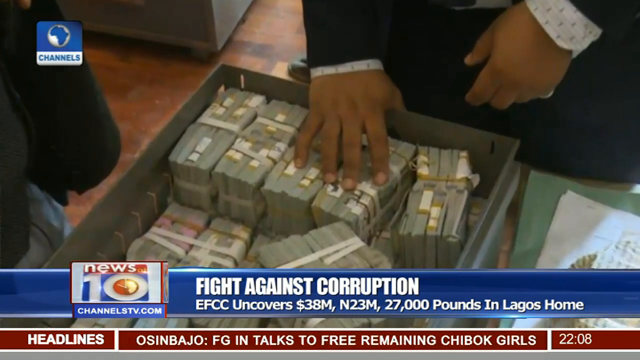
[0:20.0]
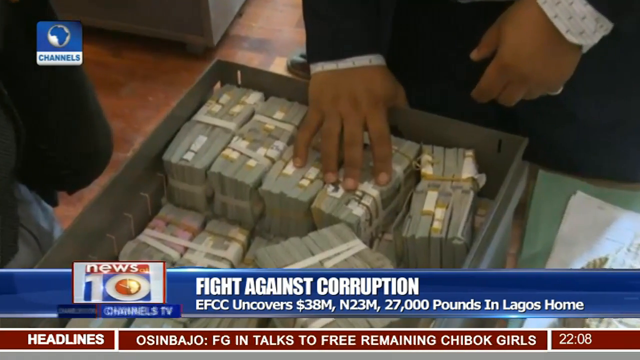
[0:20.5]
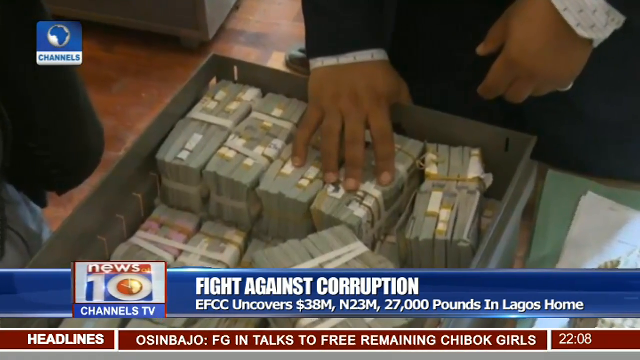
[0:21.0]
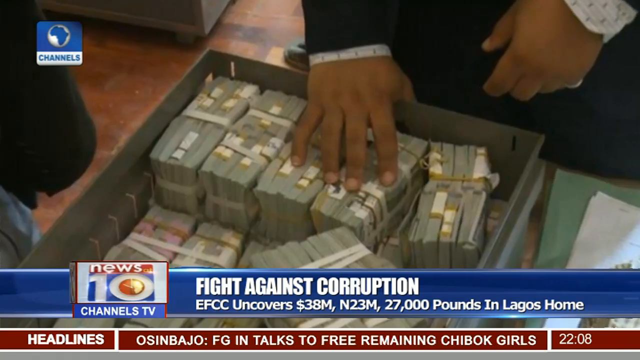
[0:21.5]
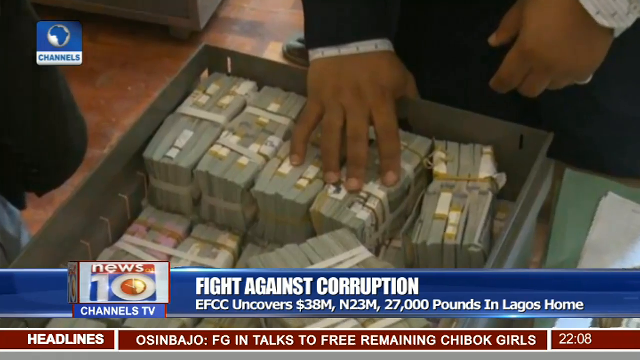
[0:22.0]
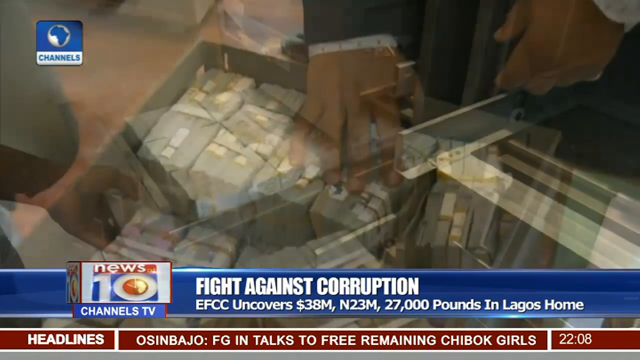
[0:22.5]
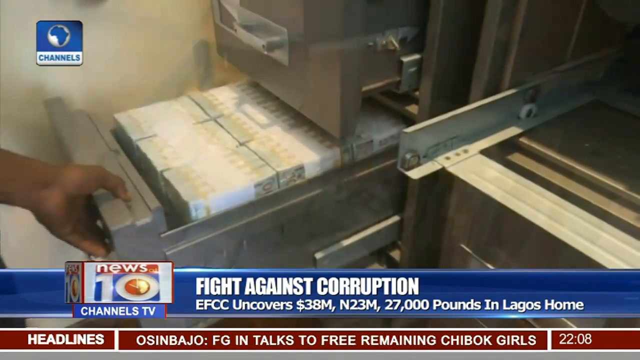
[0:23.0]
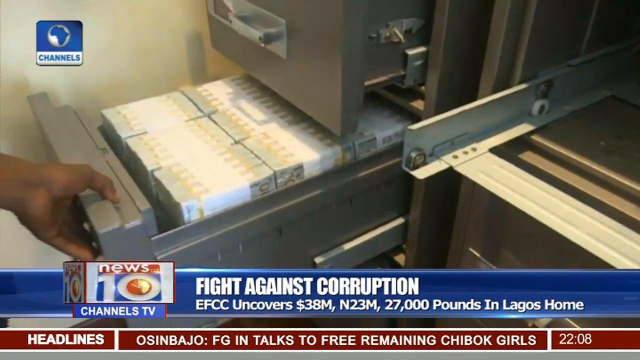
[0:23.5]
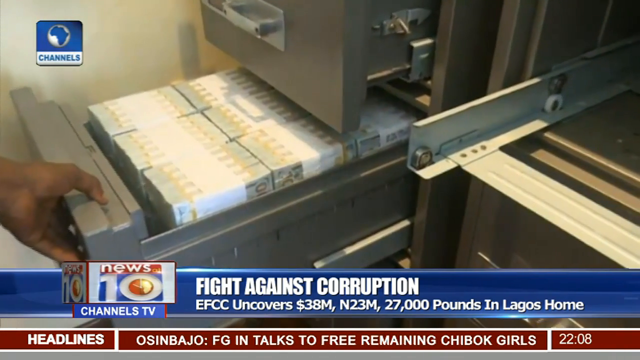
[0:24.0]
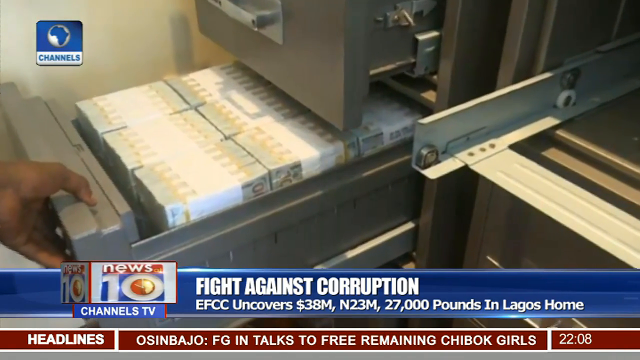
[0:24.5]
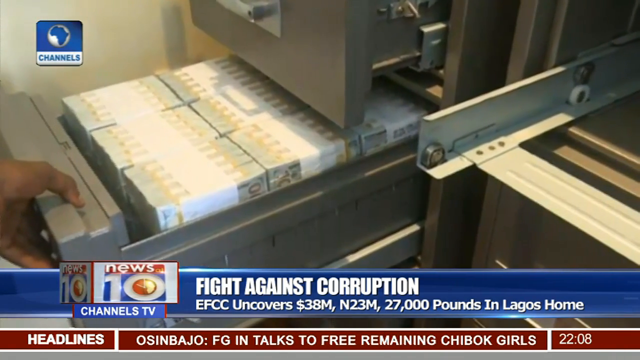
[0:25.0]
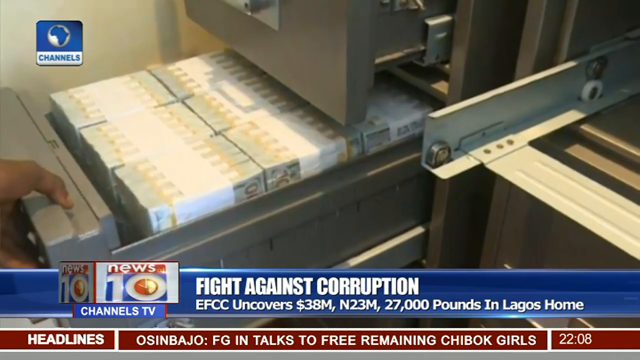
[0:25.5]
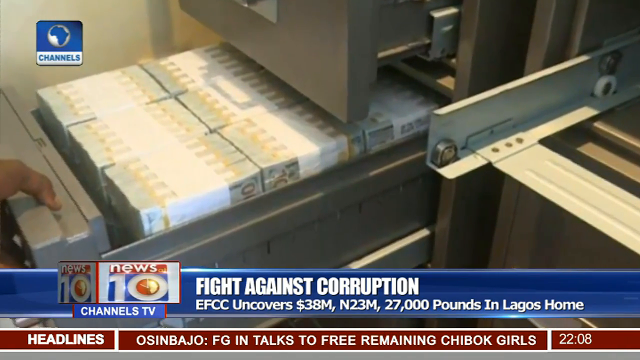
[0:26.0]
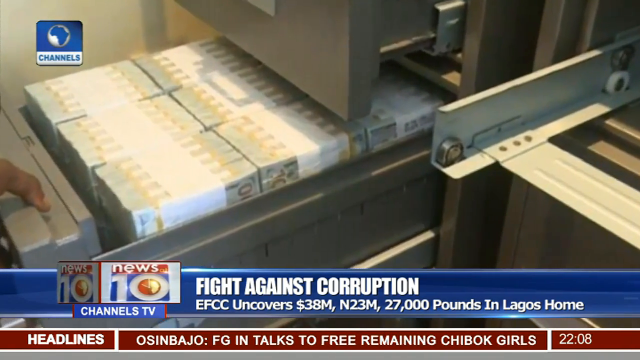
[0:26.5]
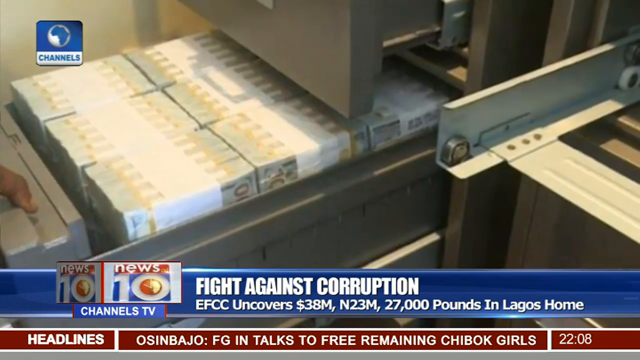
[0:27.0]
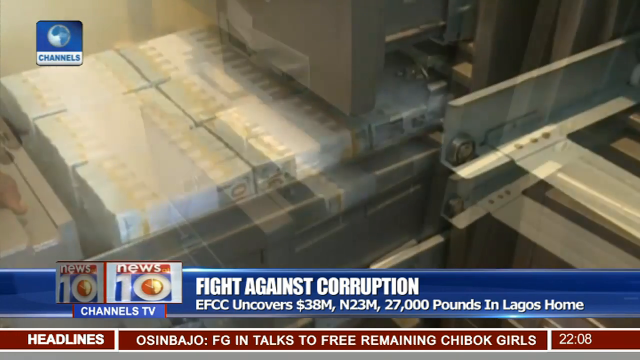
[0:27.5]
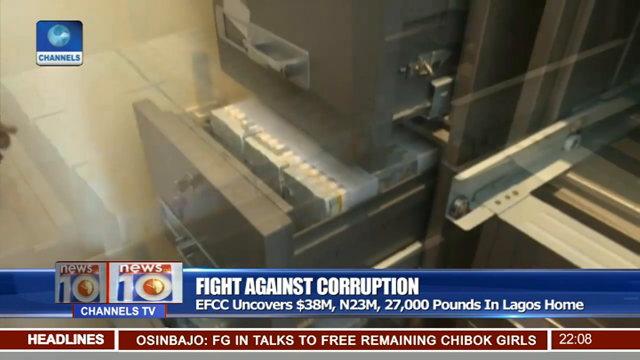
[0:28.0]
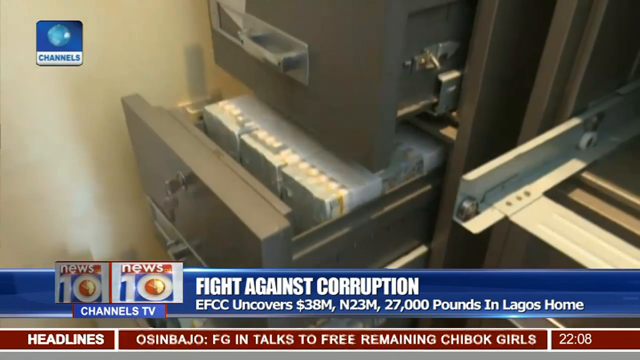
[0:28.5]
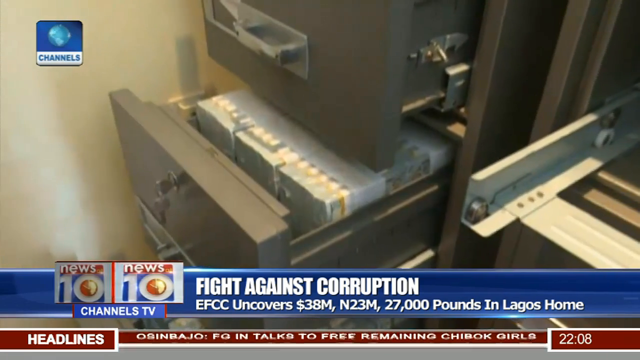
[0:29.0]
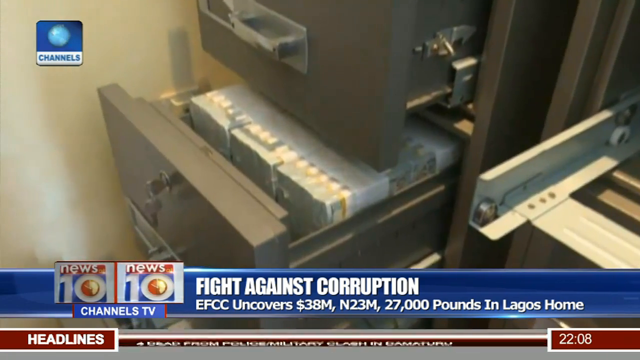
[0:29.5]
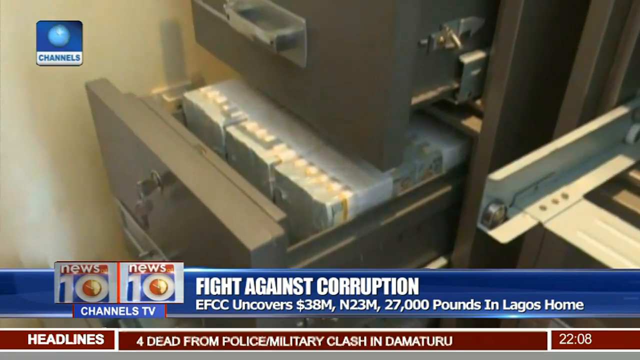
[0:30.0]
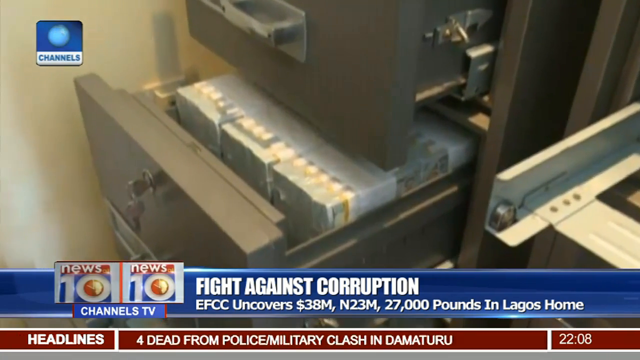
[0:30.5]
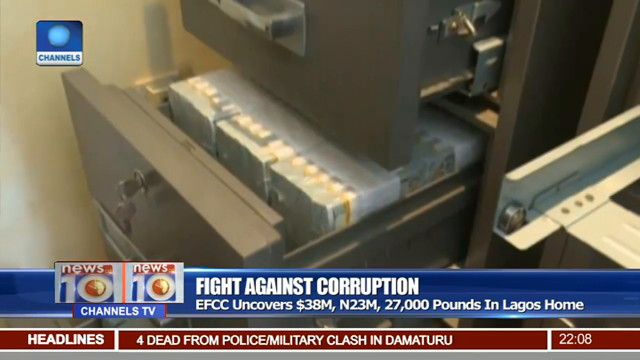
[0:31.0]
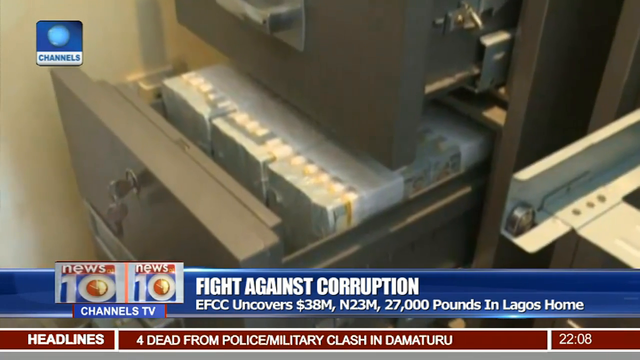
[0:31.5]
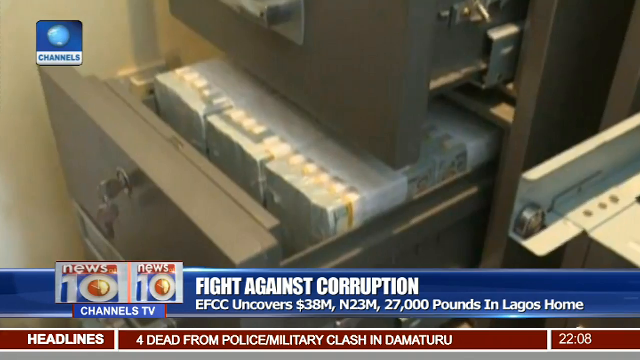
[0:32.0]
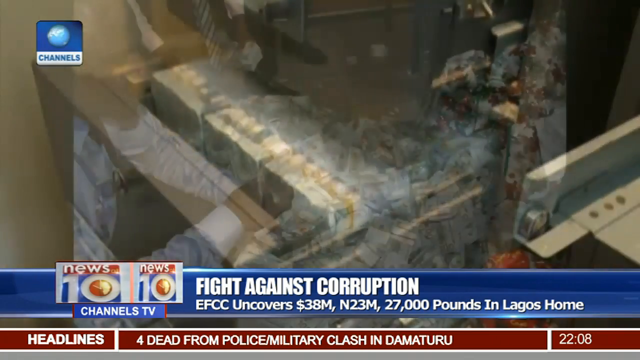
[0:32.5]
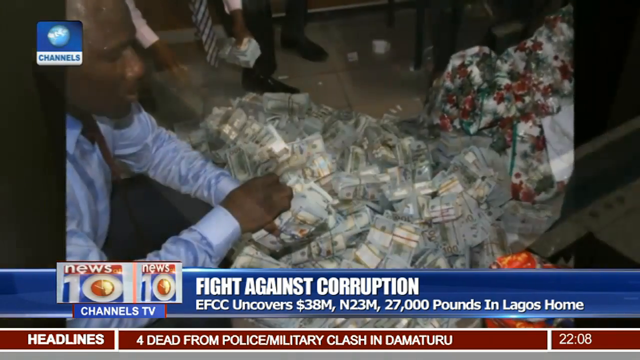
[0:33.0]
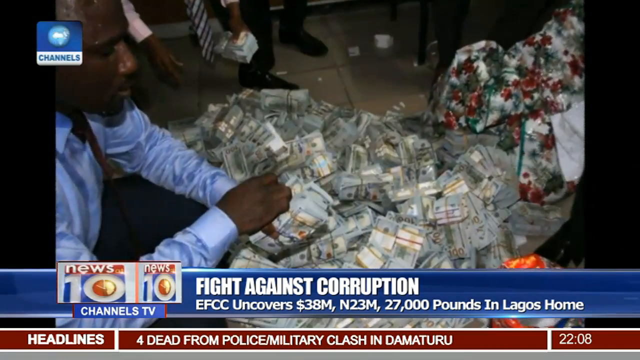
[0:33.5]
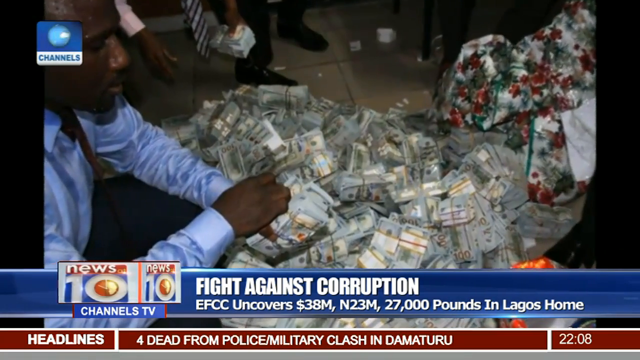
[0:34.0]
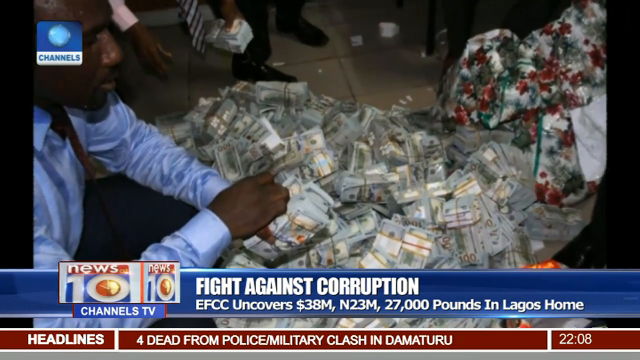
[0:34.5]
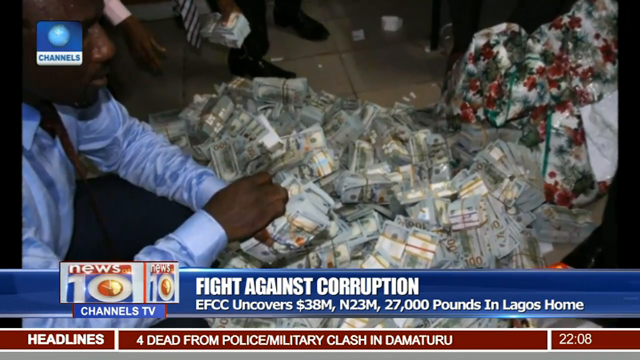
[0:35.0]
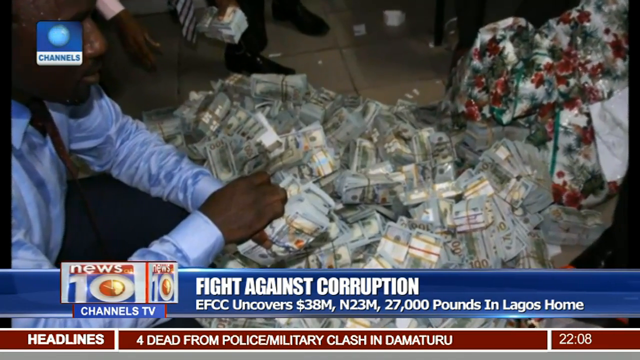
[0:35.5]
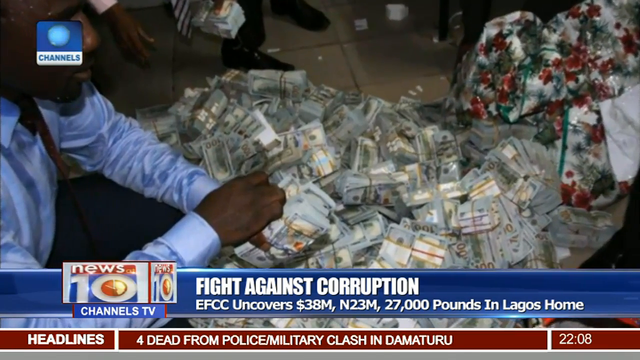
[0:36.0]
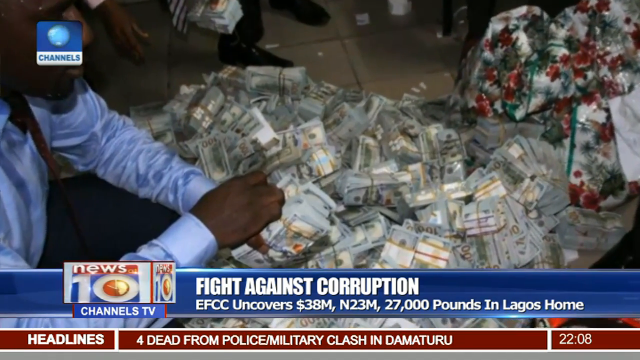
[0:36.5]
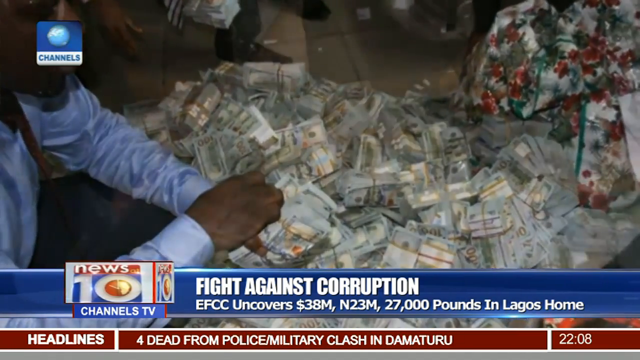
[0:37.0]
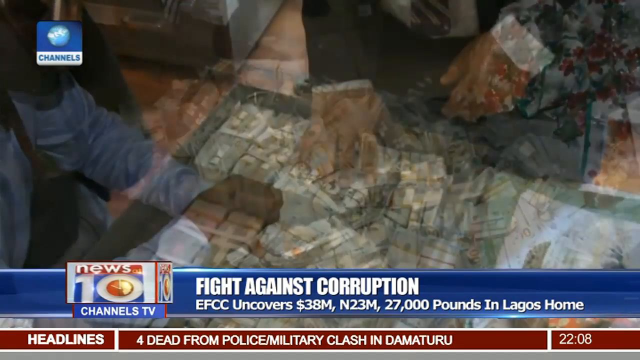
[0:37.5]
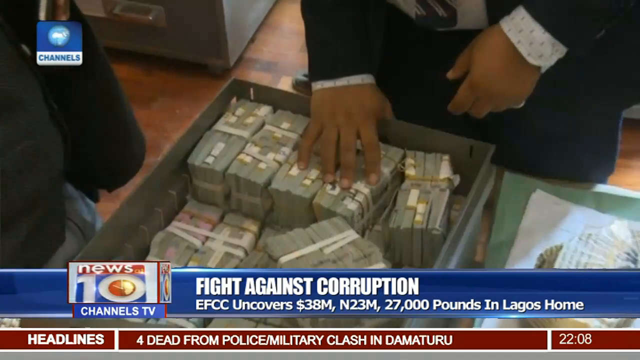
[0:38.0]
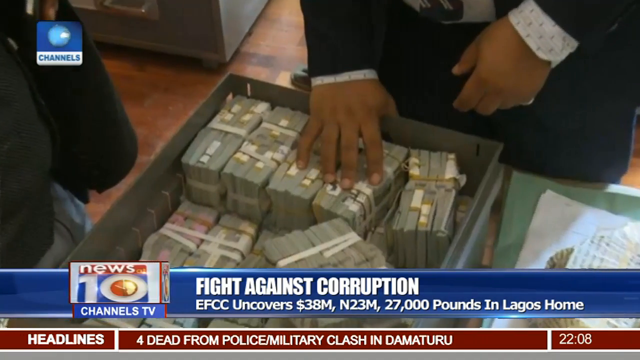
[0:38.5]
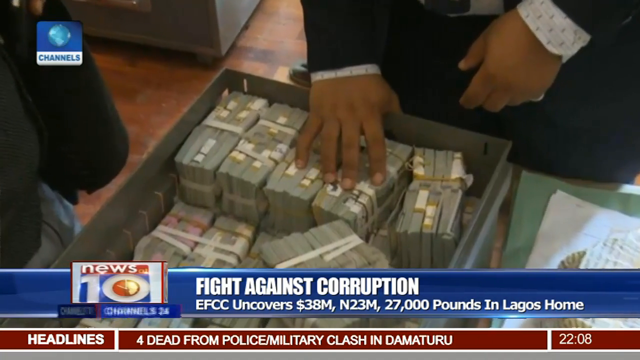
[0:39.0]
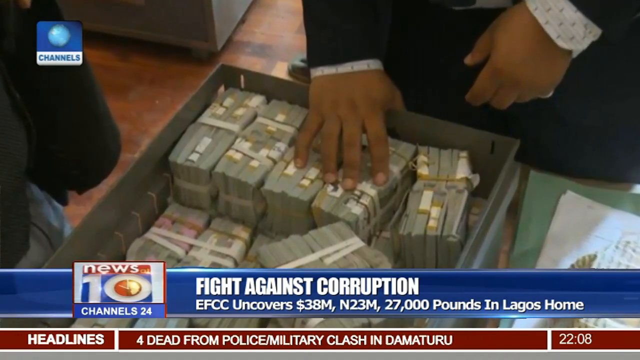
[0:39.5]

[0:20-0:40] A box of money appears with a person's hands touching the money. The person has a kind of tan skin tone and wears a dress shirt with a suit coat over it. At the bottom, white font on a blue background says "fight against corruption. EFCC uncovers 38 million, N23M 27,000 pounds in Lagos home." The headlines also mention the Chibok girls, and one reads "four dead from police crash in Dematru." Someone shows a whole bunch of money on the screen, and then the picture returns to the money in a box with someone's hand on top of it. The screen also shows "news" and "channels TV." Then there is what looks almost like open filing cabinet drawers, also filled with a lot of money.